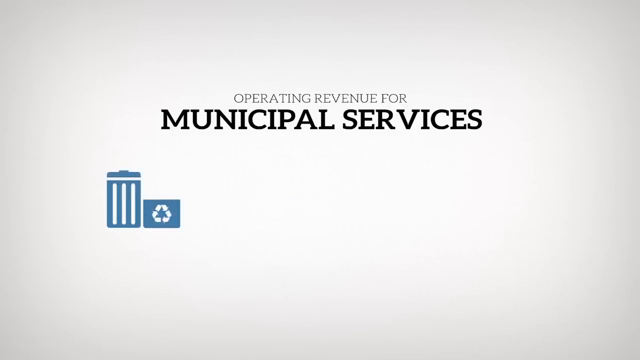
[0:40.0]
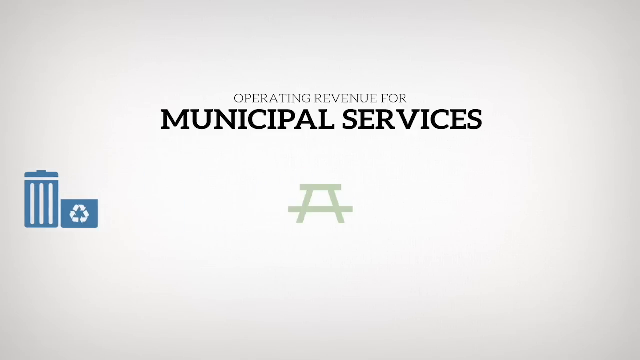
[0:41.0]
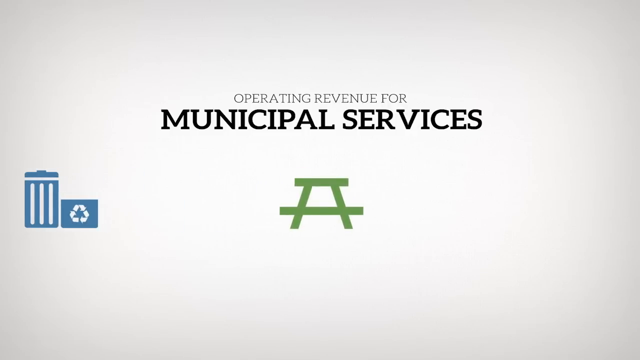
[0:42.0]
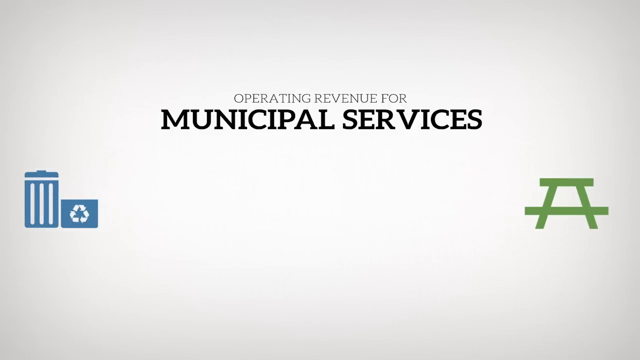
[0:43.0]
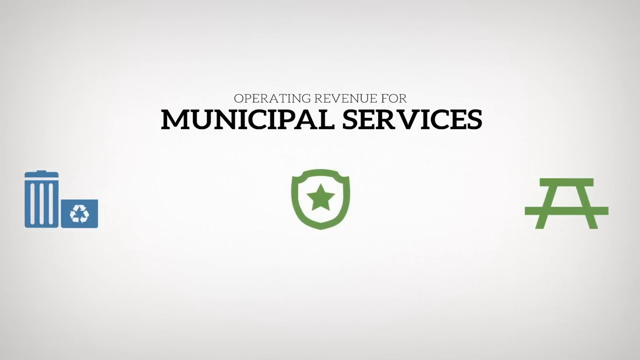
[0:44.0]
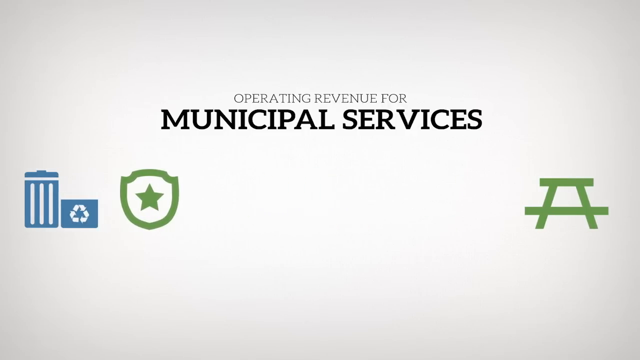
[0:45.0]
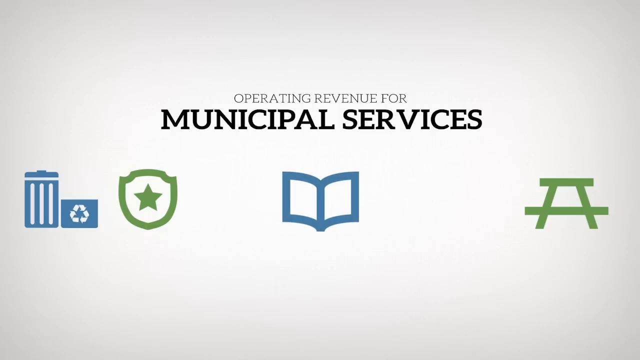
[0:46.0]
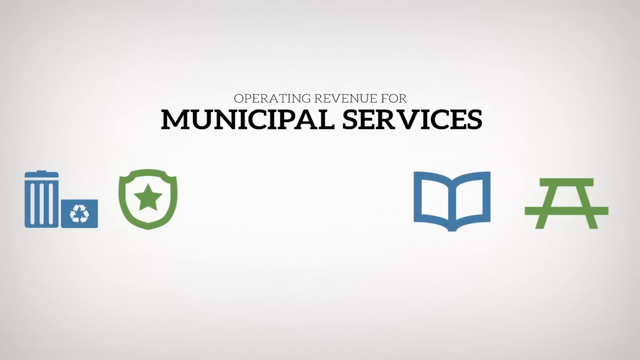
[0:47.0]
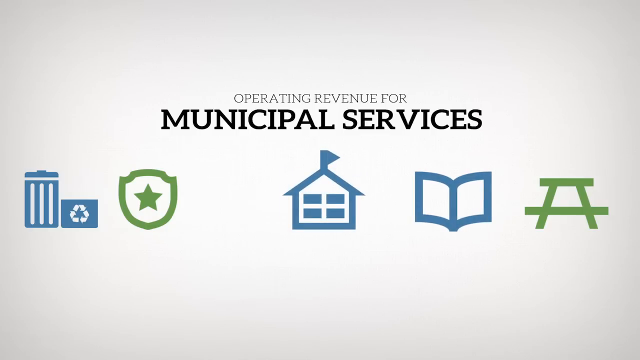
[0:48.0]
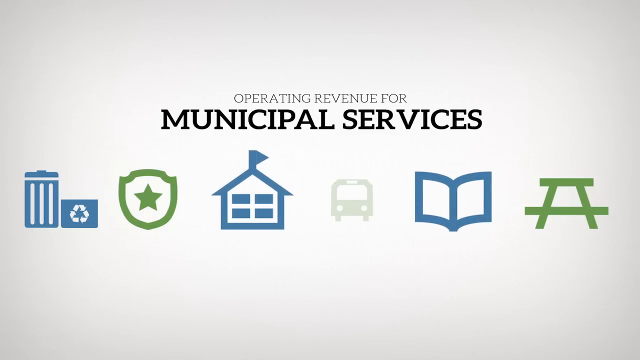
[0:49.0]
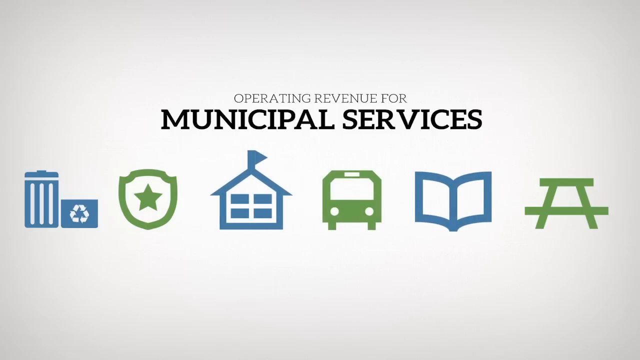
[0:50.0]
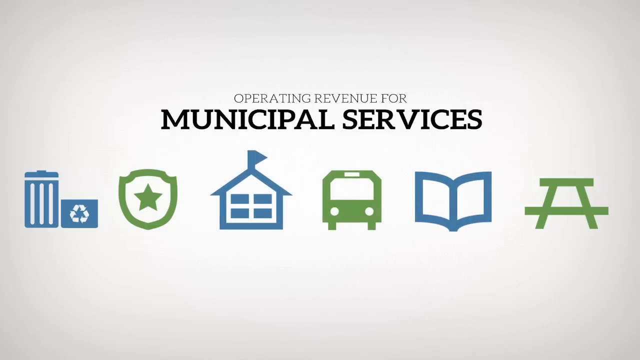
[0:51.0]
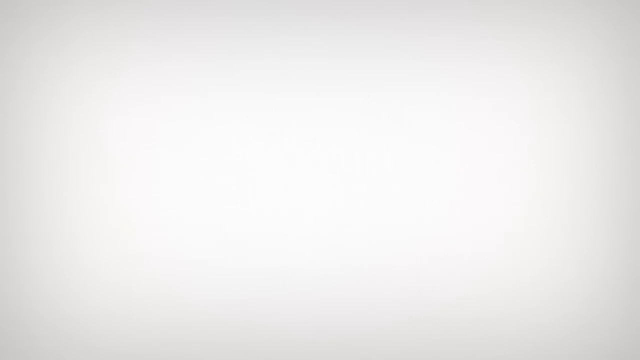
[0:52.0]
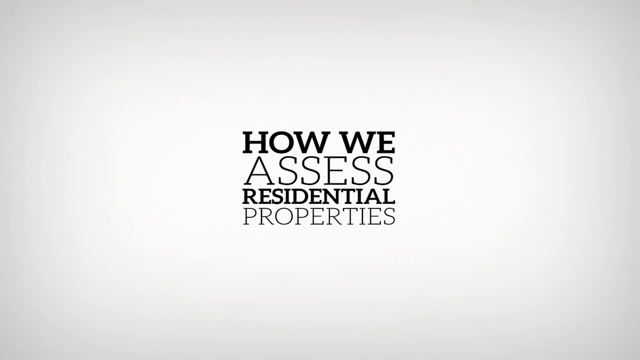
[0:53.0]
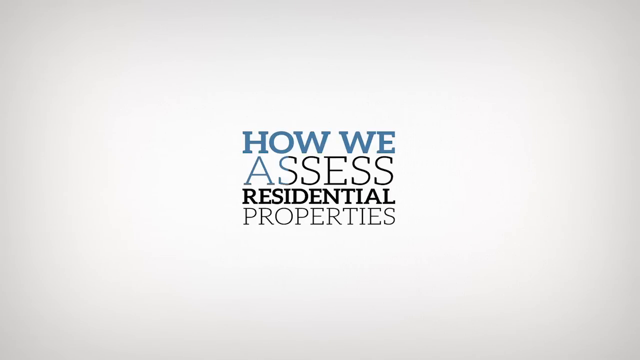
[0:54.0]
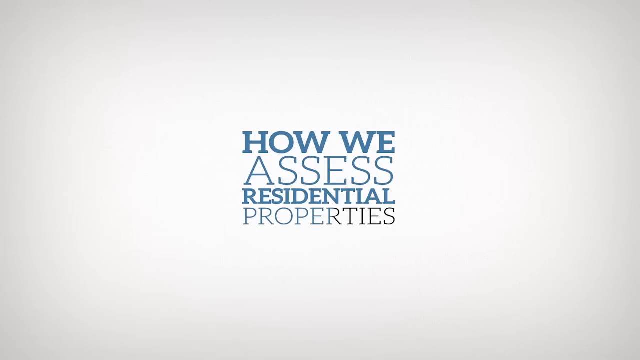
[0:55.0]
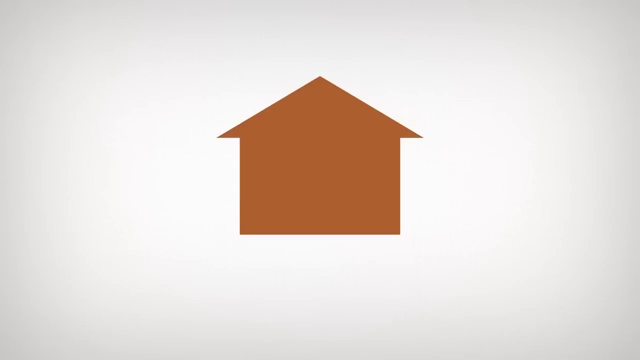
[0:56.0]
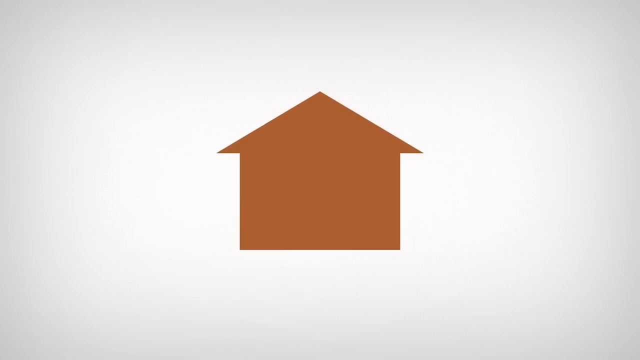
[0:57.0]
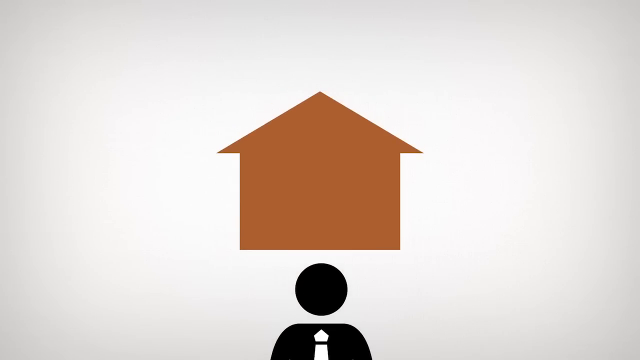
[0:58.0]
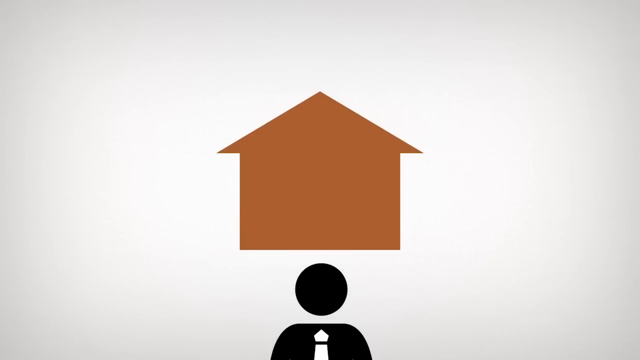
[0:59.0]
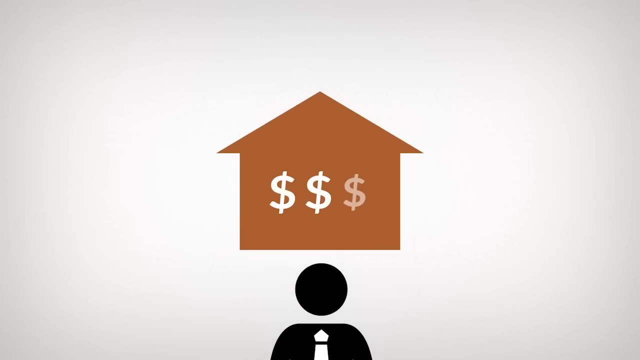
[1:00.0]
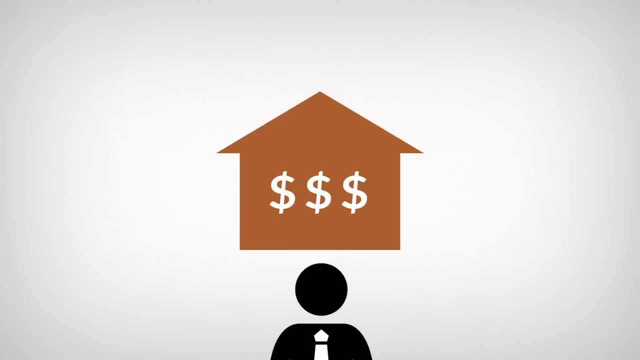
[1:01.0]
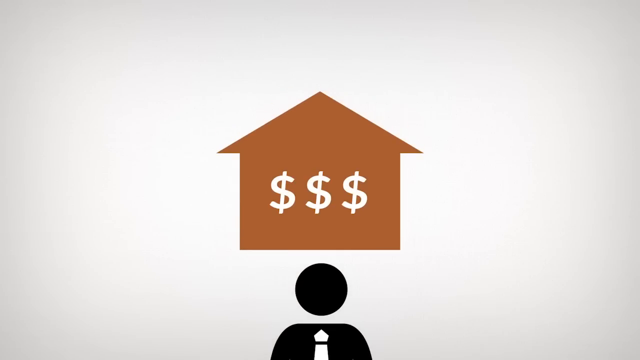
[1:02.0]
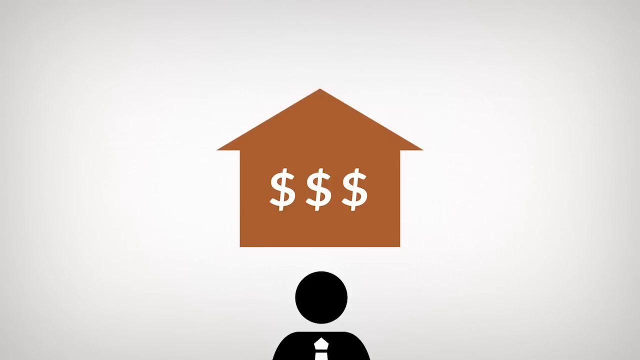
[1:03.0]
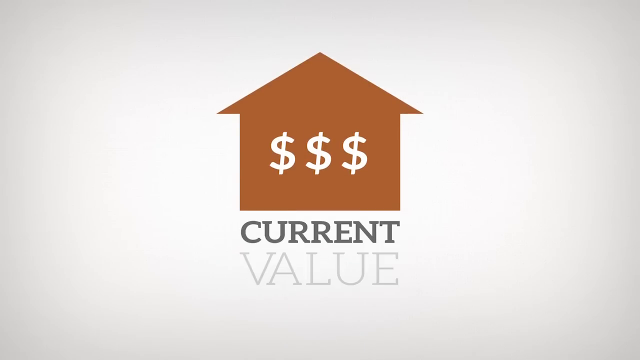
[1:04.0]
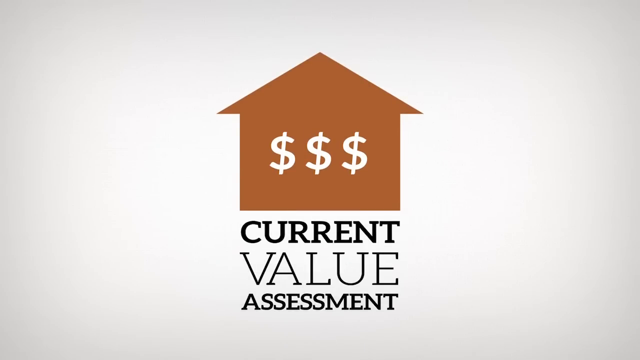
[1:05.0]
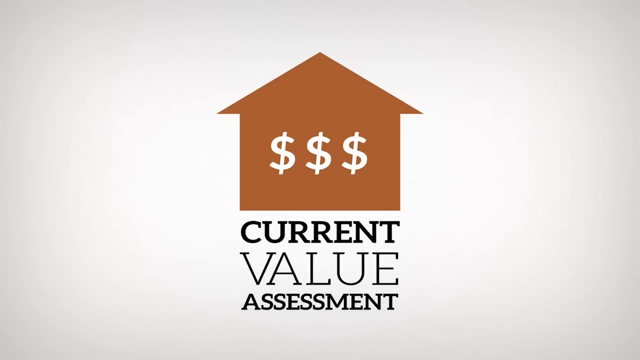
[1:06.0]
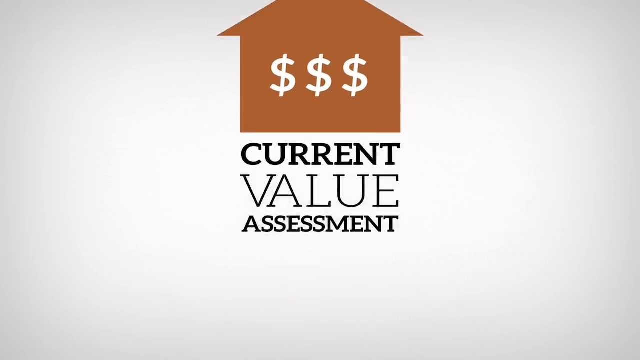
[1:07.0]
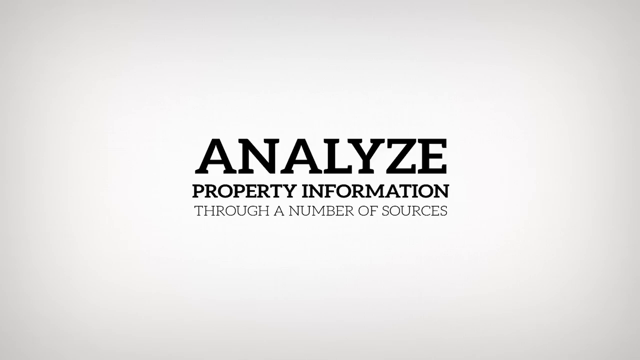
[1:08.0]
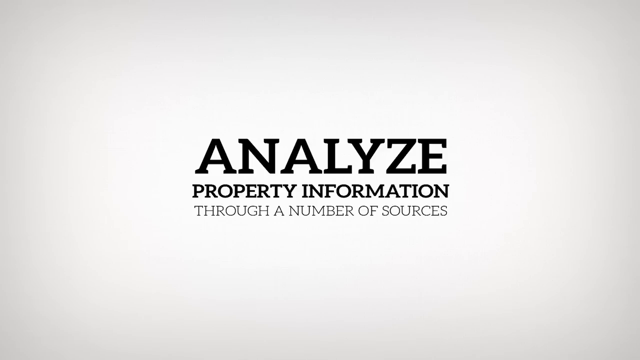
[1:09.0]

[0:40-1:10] On a whitish-gray background, black all-caps text reads "operating revenues for municipal services". A graphic icon of a trash can with a lid has a recycling symbol beside it. The trash can and recycling symbol move to the left, and a drawing of a green park bench appears in the center. It moves to the right, and a badge-type icon with a star appears in the center. It moves to the left, and an open book icon appears in the center. It moves to the right, and a building with a flag on top appears in the middle. It moves to the left, and a bus appears in the middle of the screen and stays there. Then all of the images disappear, and an animation pulls the all-caps text "how we assess residential properties" from the right to the center of the screen.